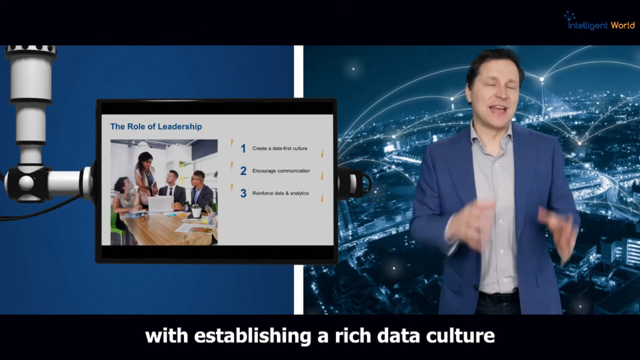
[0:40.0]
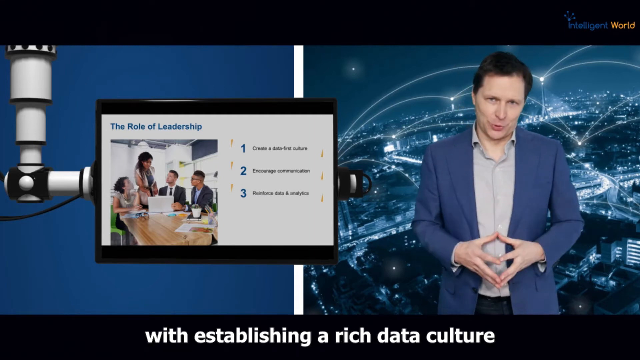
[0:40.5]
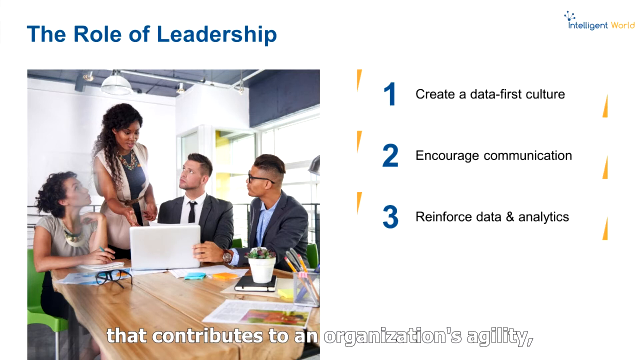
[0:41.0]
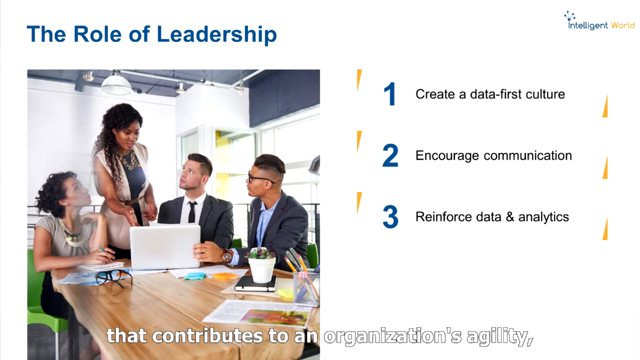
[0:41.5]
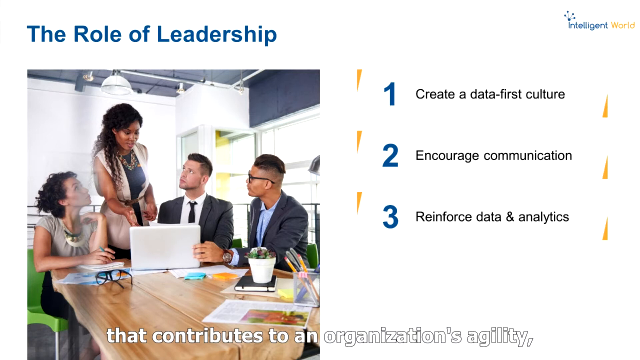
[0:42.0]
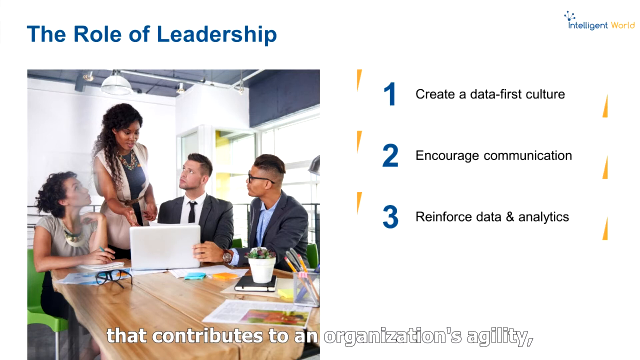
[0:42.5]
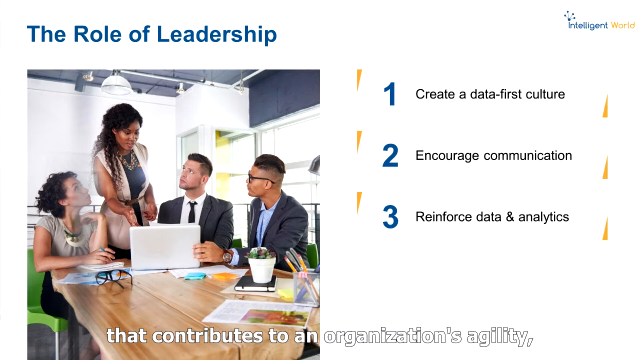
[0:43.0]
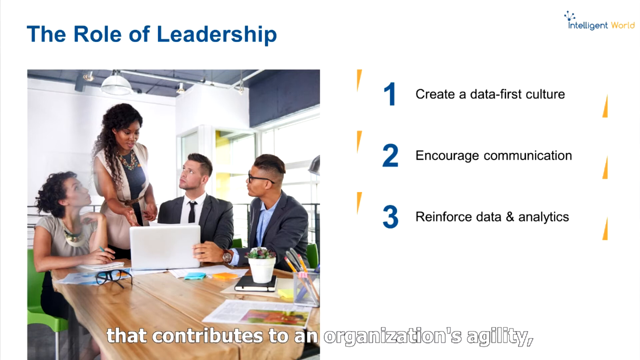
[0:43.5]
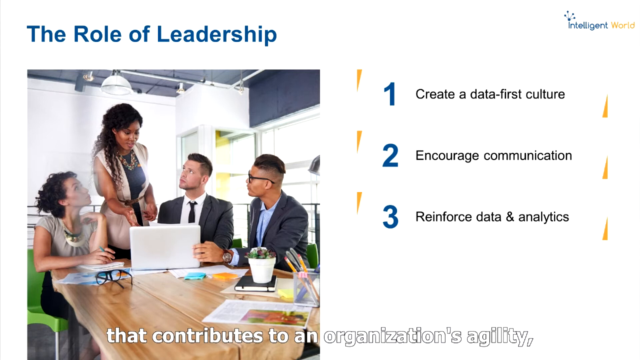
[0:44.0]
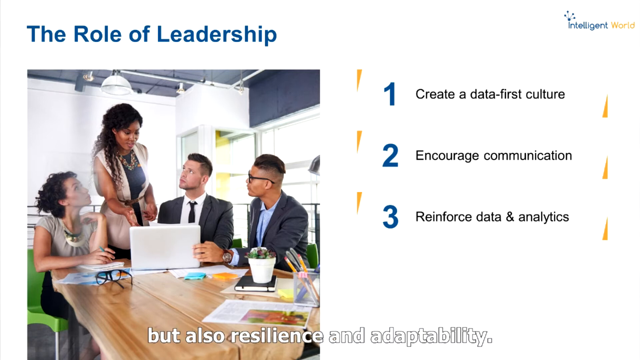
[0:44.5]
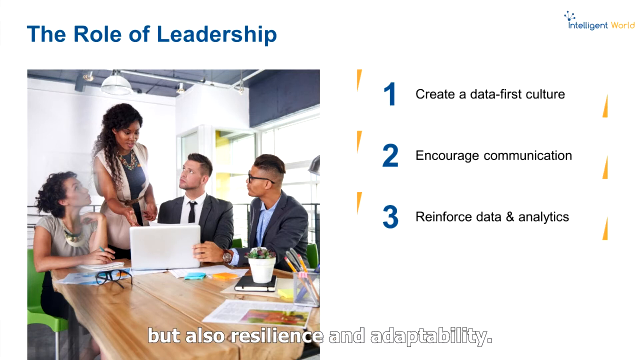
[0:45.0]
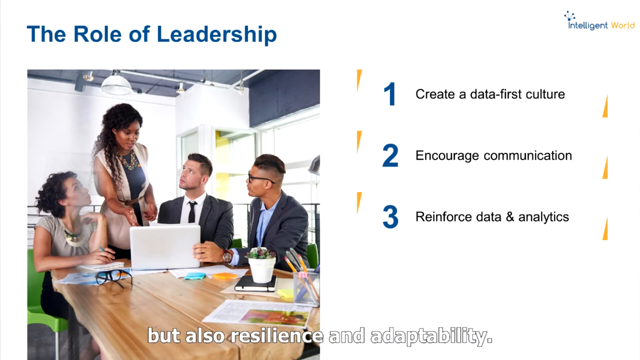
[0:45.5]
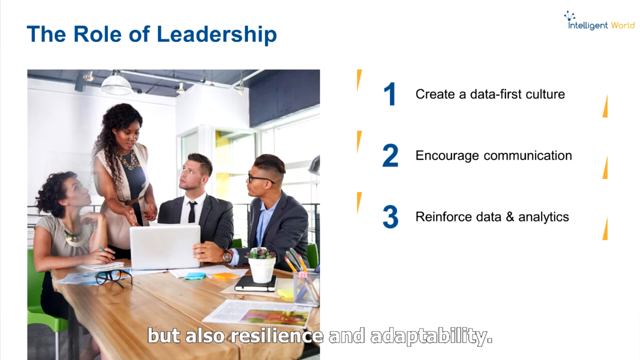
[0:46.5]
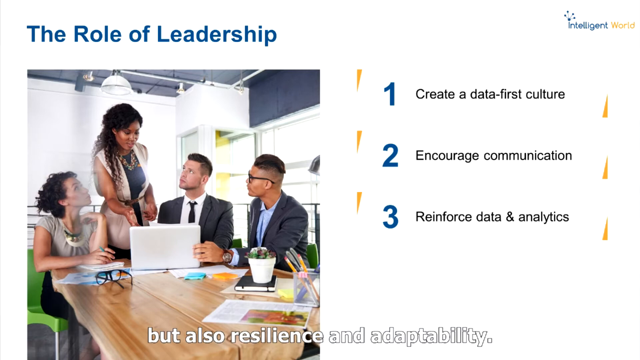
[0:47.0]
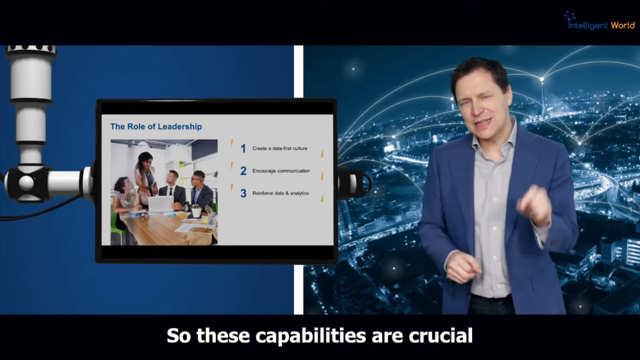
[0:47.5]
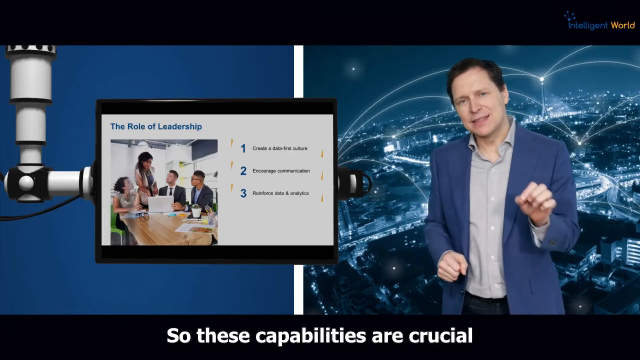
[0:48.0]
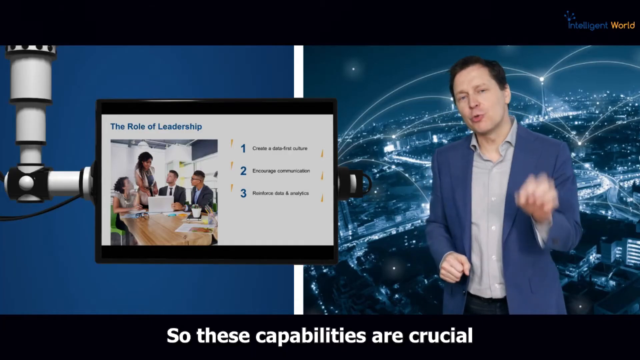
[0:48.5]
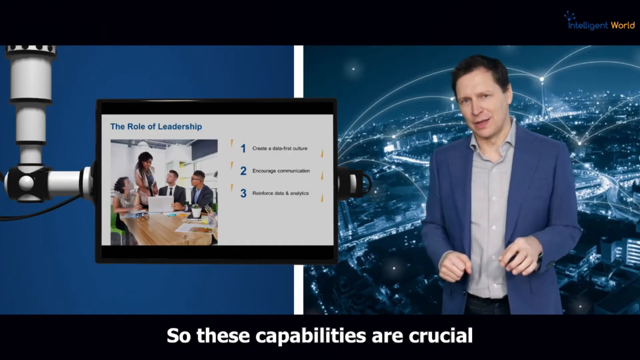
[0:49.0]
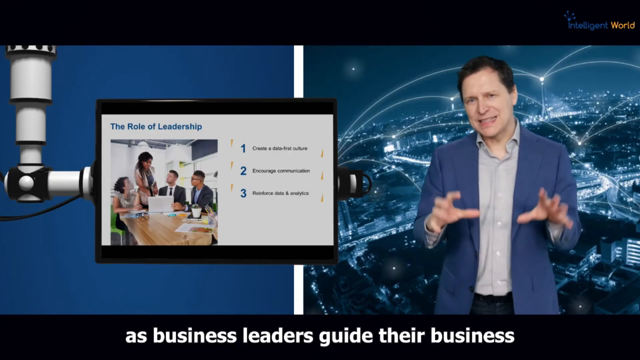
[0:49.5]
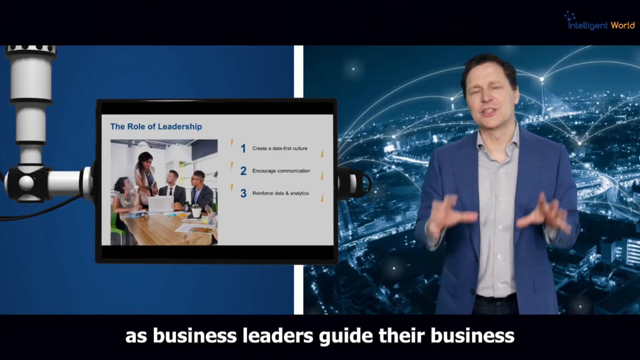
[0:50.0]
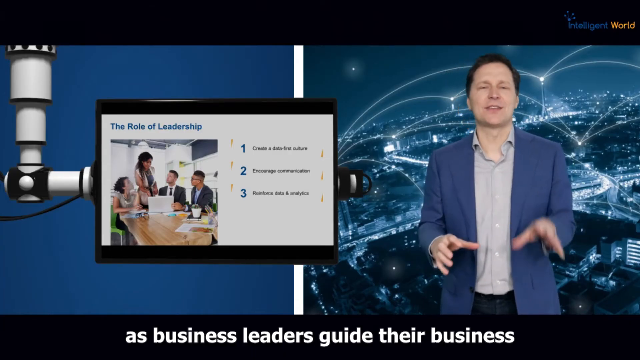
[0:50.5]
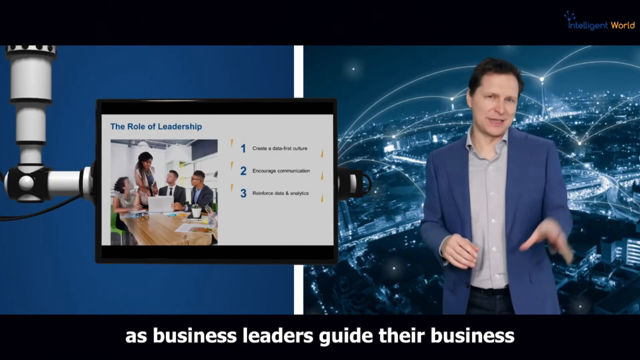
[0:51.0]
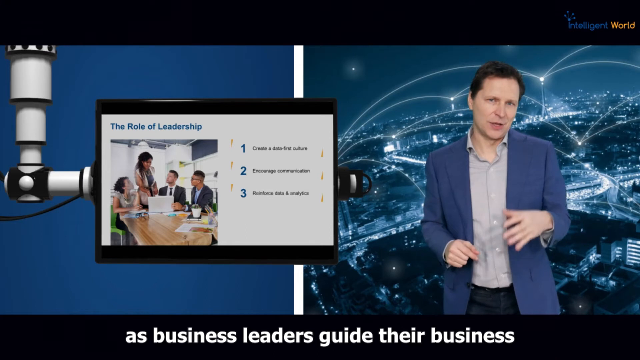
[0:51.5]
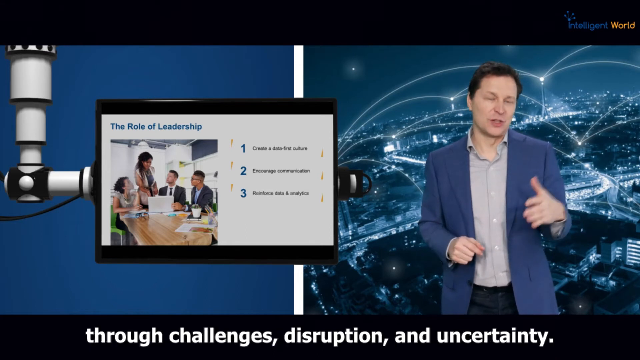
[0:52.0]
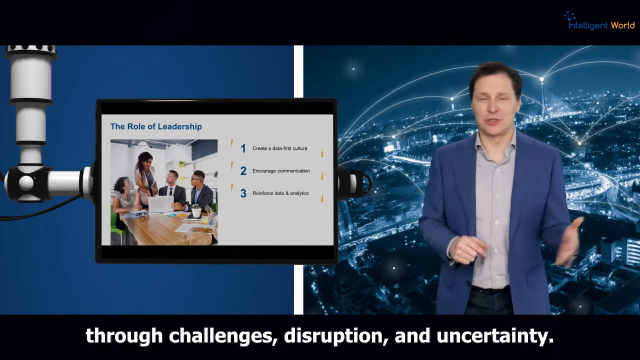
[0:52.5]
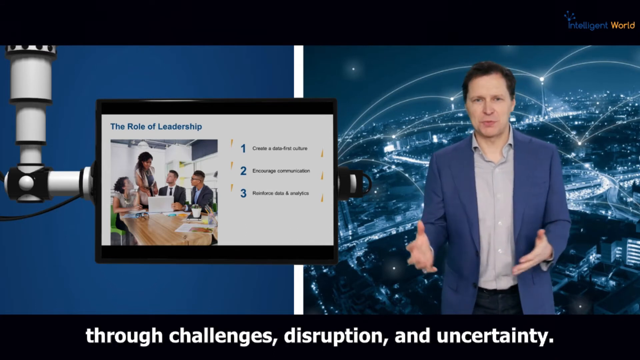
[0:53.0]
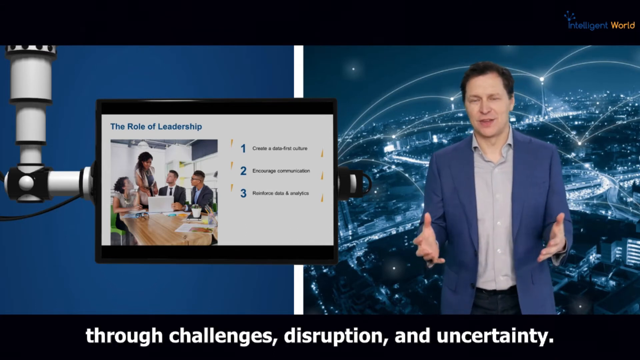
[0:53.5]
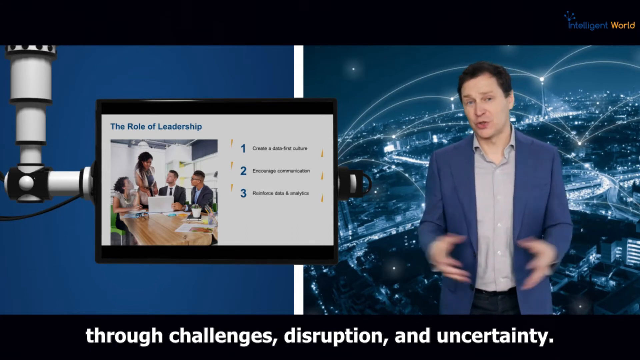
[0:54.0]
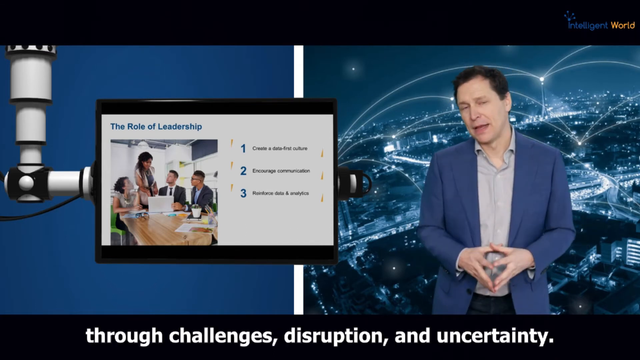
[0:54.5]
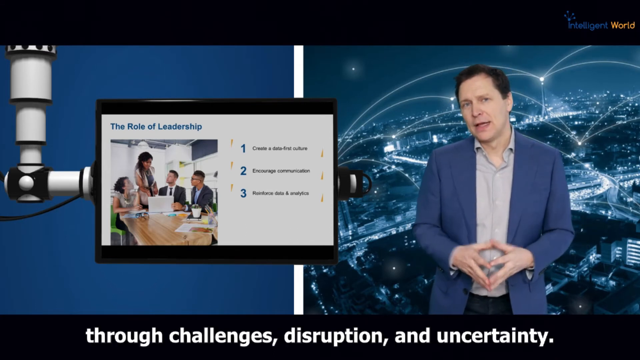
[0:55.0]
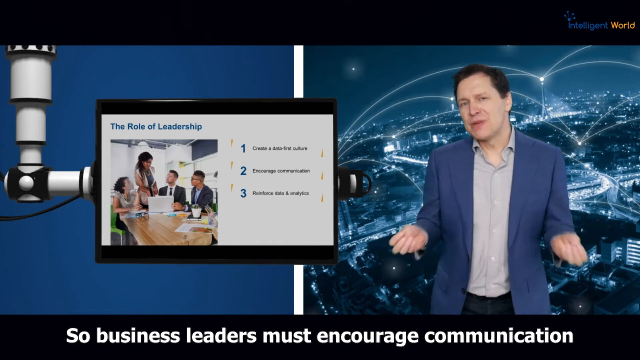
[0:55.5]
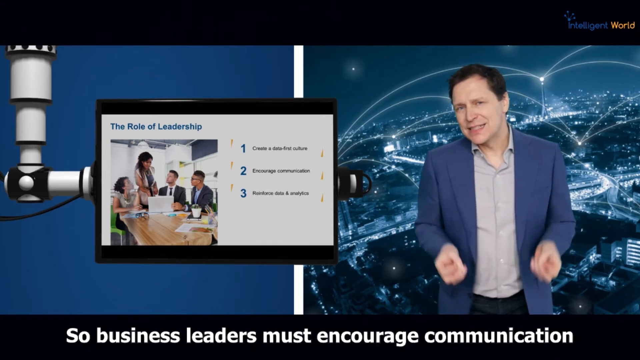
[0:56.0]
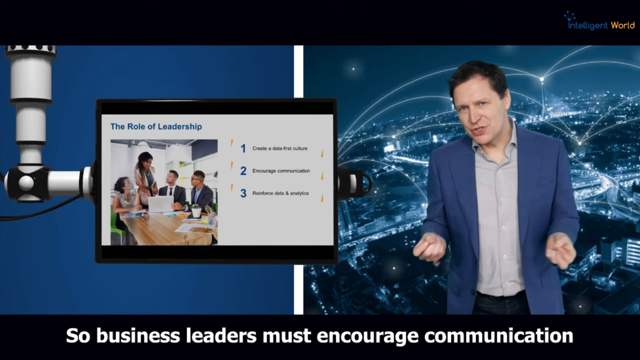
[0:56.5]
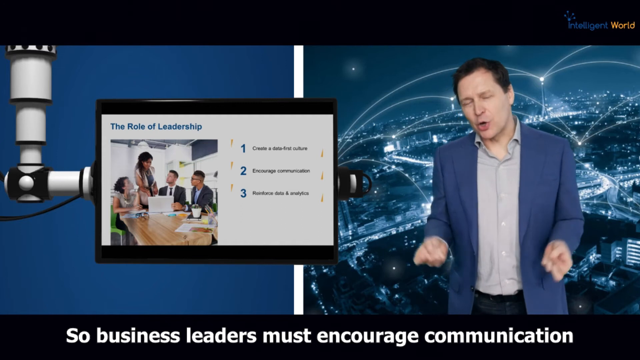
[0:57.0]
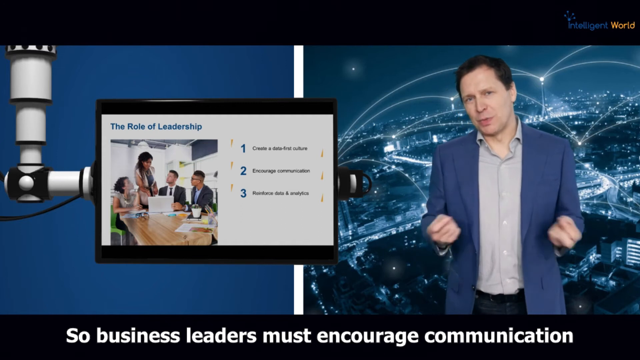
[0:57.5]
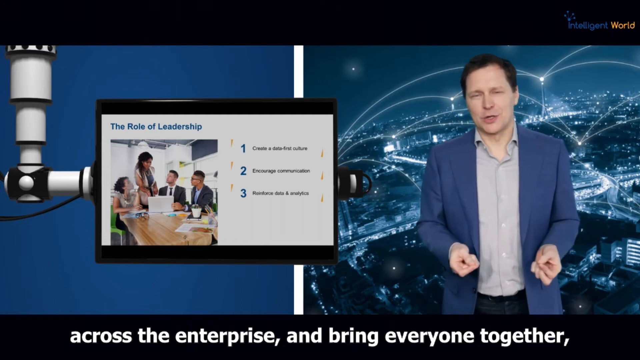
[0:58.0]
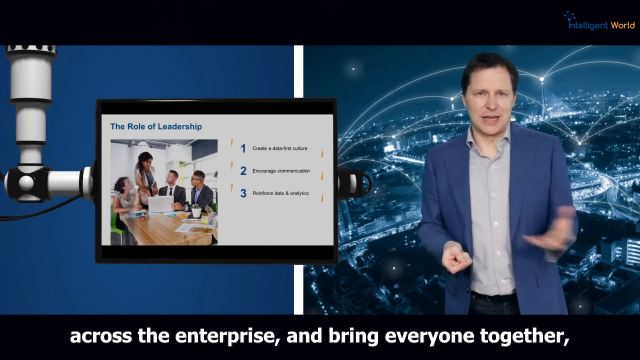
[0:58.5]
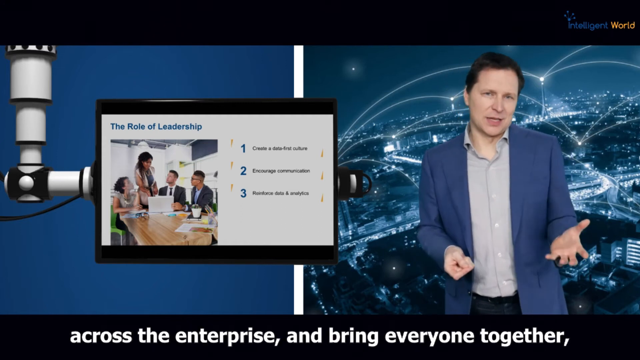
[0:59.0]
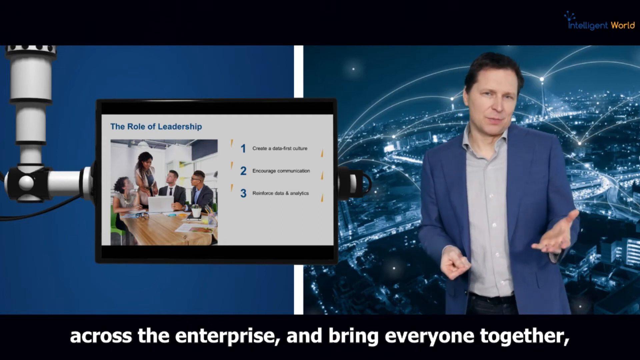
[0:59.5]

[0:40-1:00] The monitor shows a PowerPoint-style slide titled "the role of leadership." On its left is a picture of four people sitting at a brown table in what looks like an office area with high ceilings, and there are three bulleted points that cannot be made out. The white man giving the presentation stands next to the monitor, and the text at the bottom says "with establishing a rich data culture." The slide is then brought up to take up the whole screen: "1. create a data-first culture, 2. encourage communication, 3. reinforce data analytics." The camera pans back out to the man, back on the right-hand side, speaking and gesturing with his hands. Closed captions are still visible below, one line reading "so business leaders must encourage communication," followed by "across the enterprise" before the sentence cuts off abruptly. He continues to move his hands and talk.